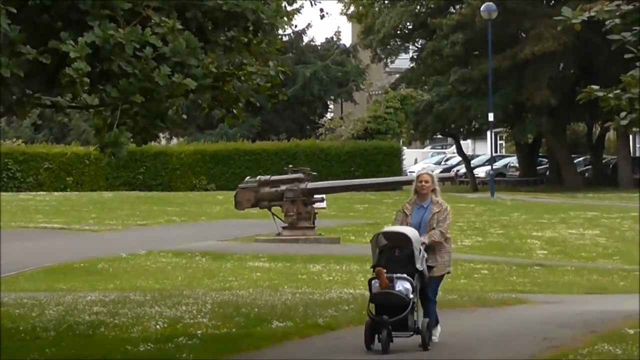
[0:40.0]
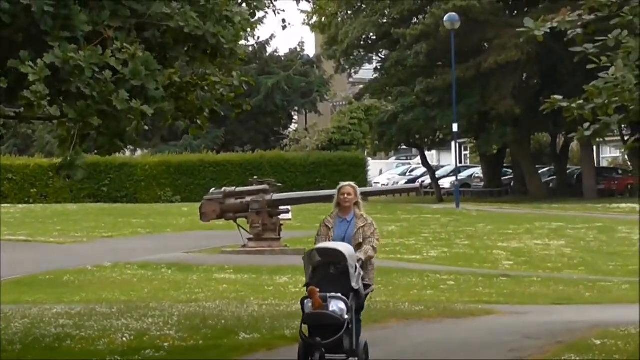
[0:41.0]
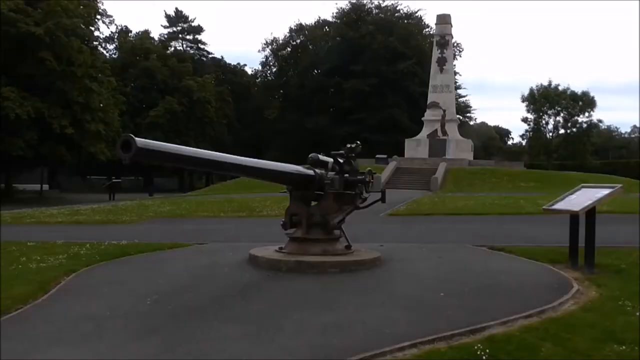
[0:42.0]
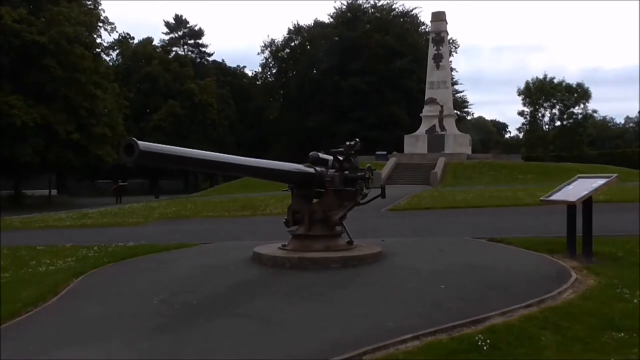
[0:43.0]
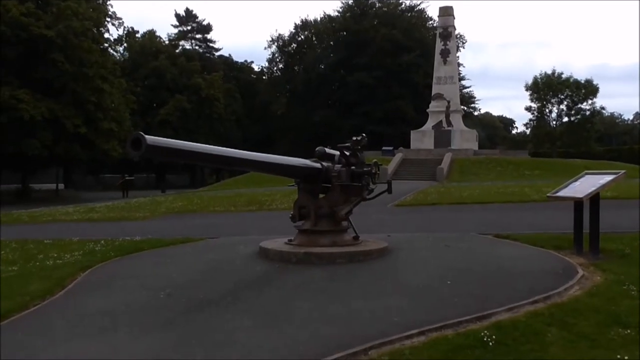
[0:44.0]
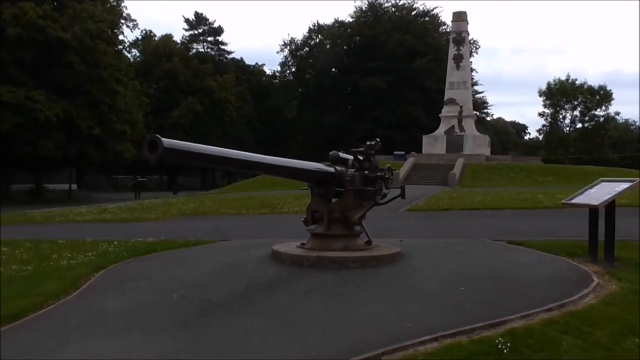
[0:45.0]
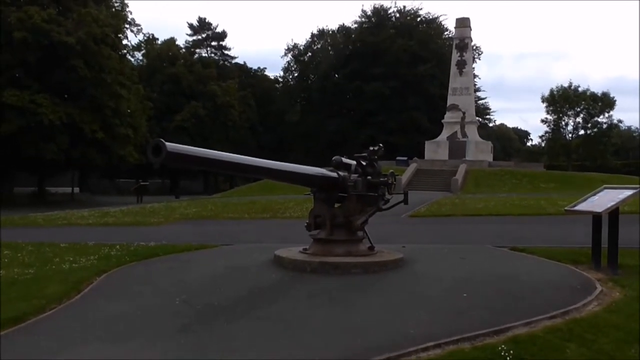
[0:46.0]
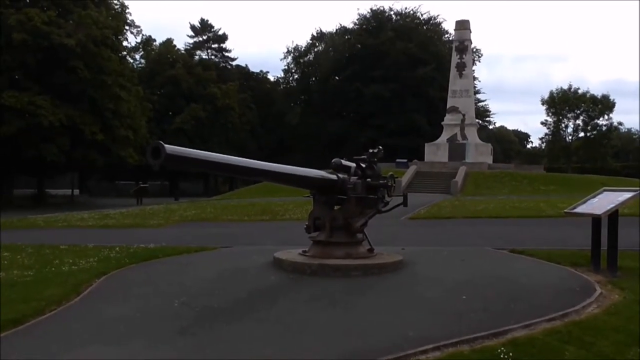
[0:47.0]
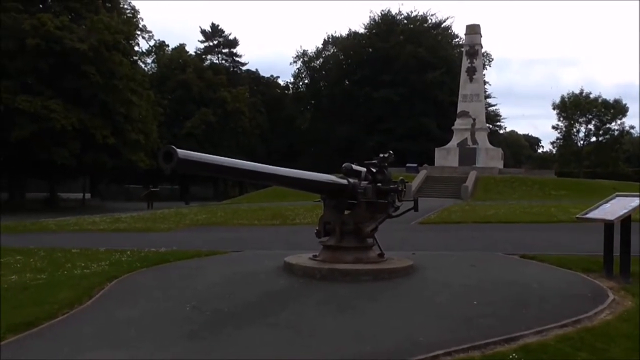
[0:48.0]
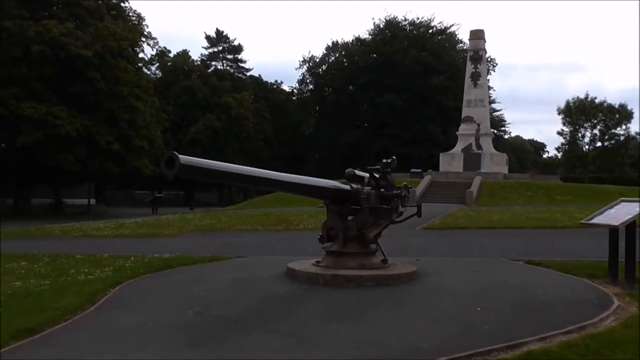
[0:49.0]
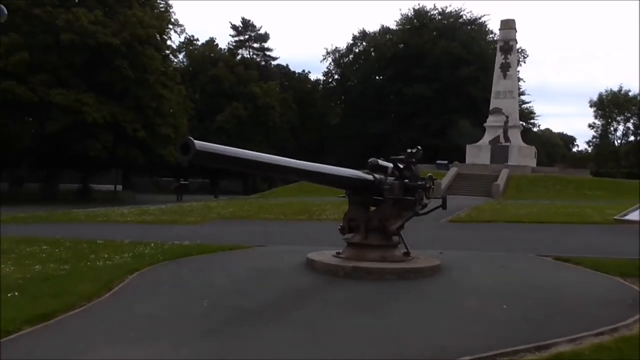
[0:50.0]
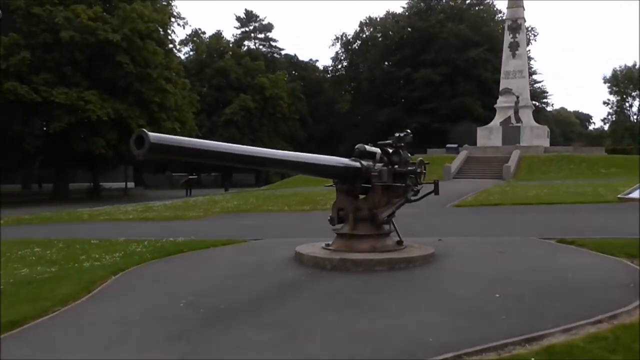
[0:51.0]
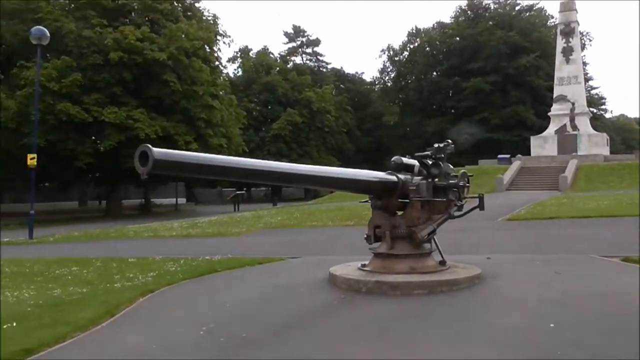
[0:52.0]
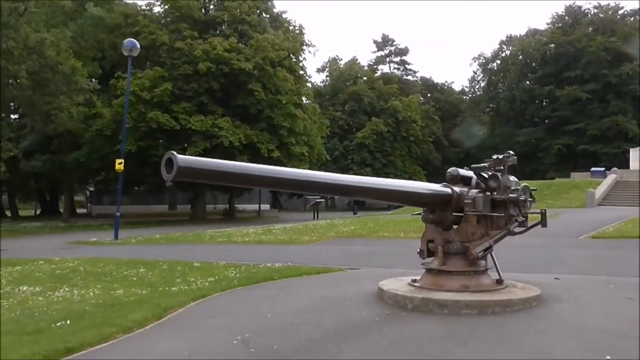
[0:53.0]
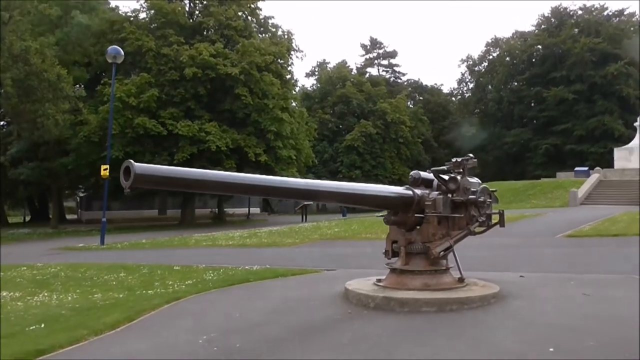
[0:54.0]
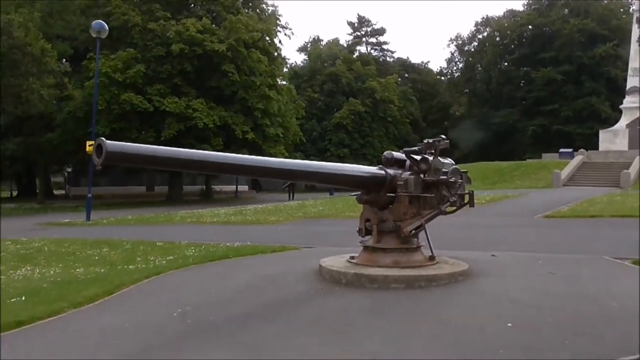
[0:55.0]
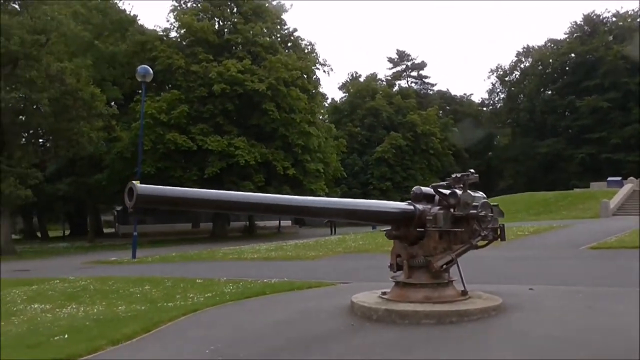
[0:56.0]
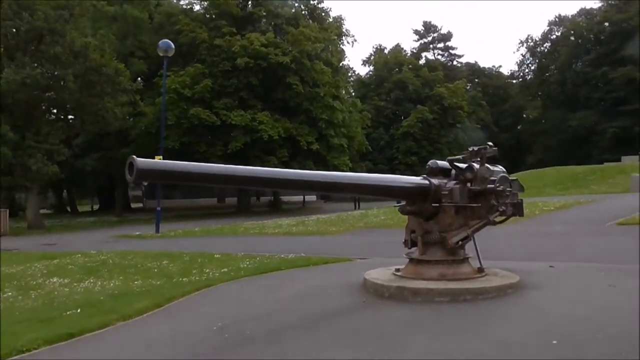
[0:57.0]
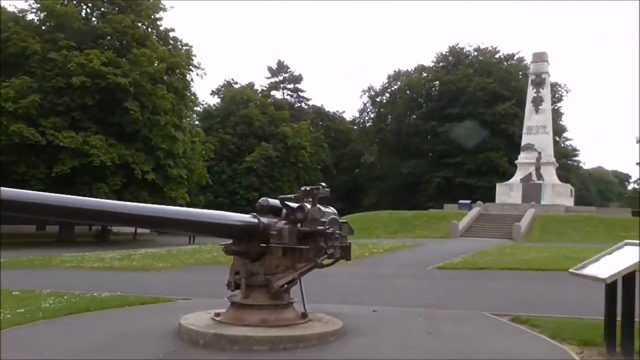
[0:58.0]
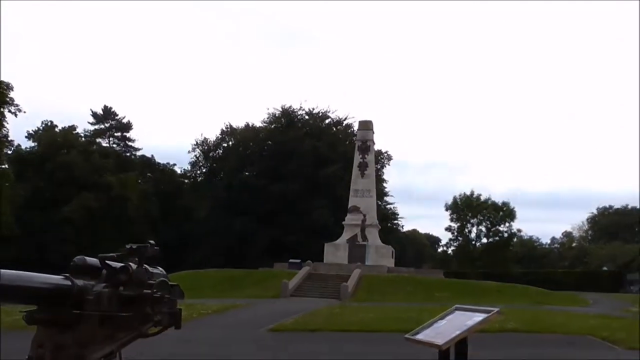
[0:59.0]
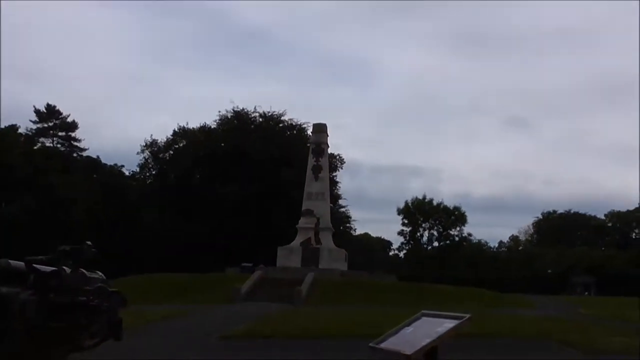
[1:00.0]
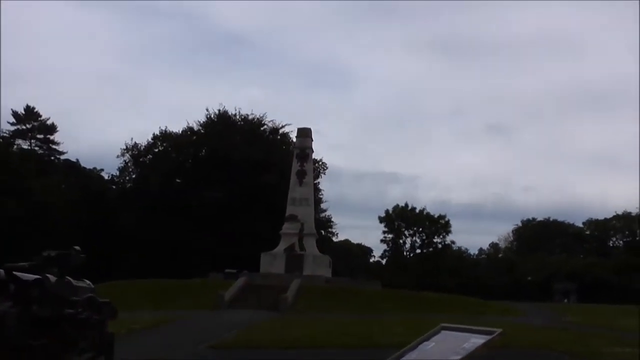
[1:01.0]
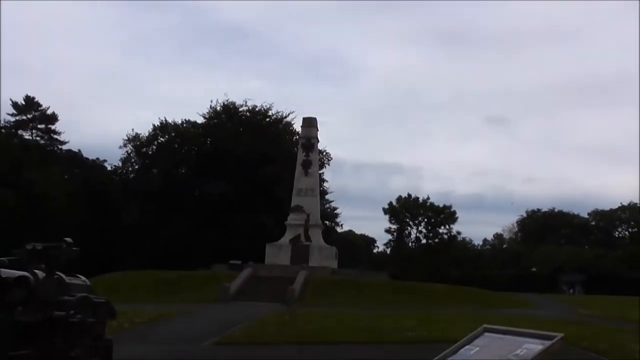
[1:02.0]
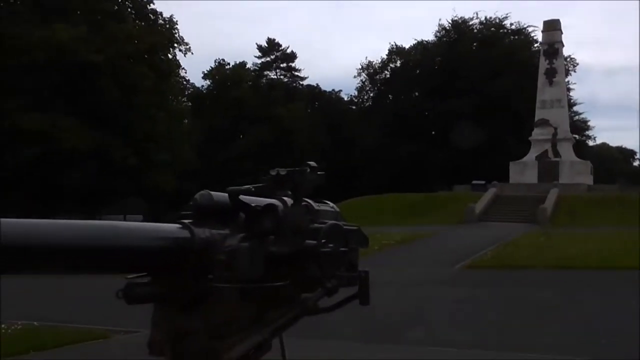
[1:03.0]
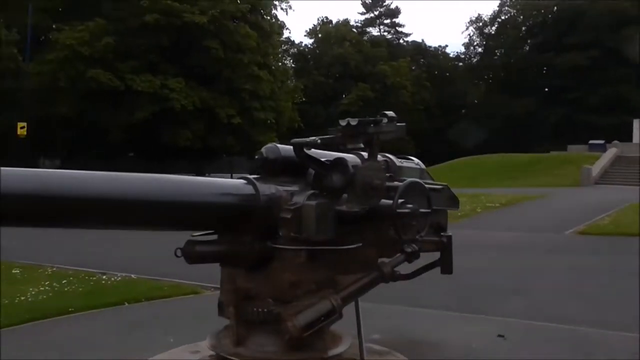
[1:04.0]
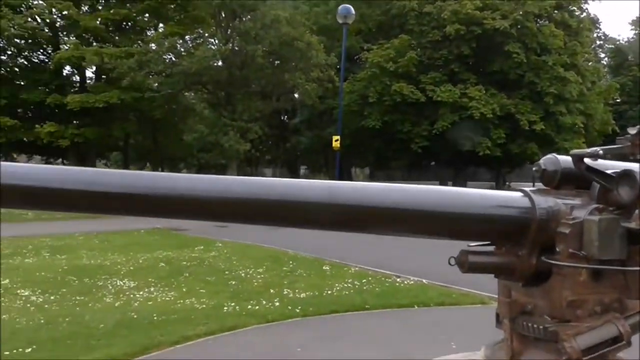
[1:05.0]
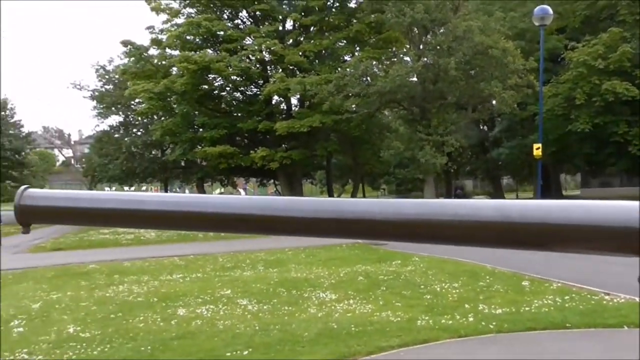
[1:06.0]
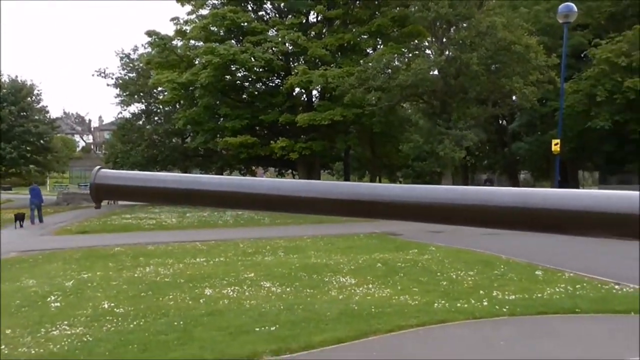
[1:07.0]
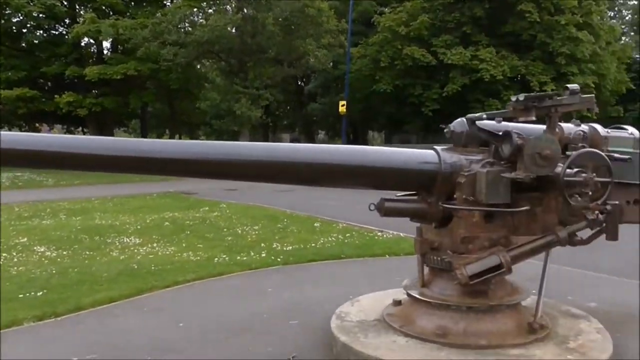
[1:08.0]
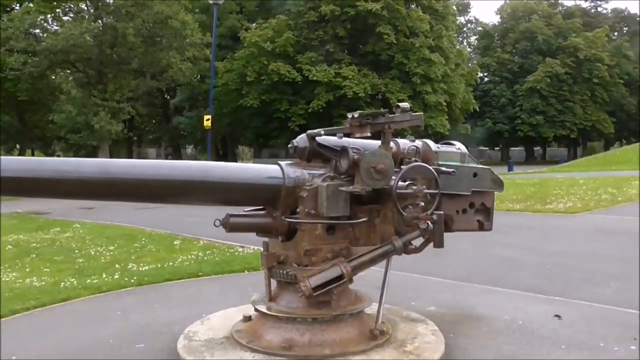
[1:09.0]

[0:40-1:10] An artillery gun is seen from a distance in the park, and then the scene switches to a close-up of it. The gun is mounted in a cement circle, and beyond it is a large stone monument that looks like an obelisk at the top with a slightly wider base. Steps lead up to the monument, and the rest of the area around it is covered in grass. To the right of the gun is a sign on two posts. The camera moves around the side of the gun, which is mounted on a pedestal, and then moves closer to the monument in the background. It turns again for a very close view of the side of the gun, where there is a wheel that looks like a ship's wheel. The metal is dark, almost black.